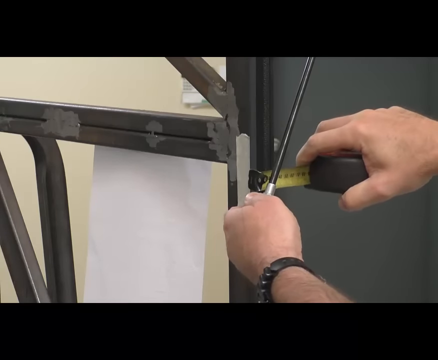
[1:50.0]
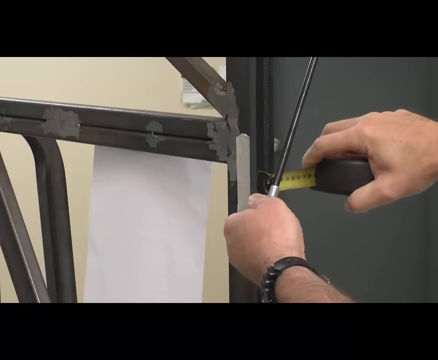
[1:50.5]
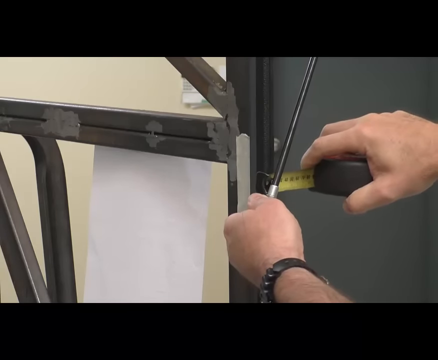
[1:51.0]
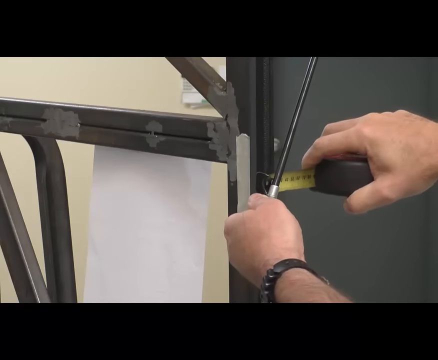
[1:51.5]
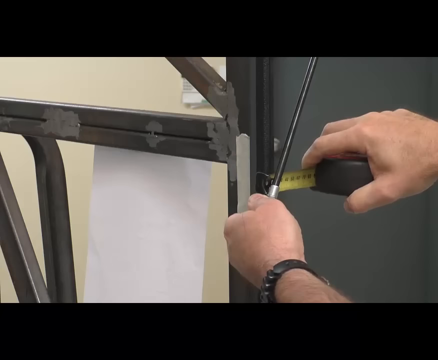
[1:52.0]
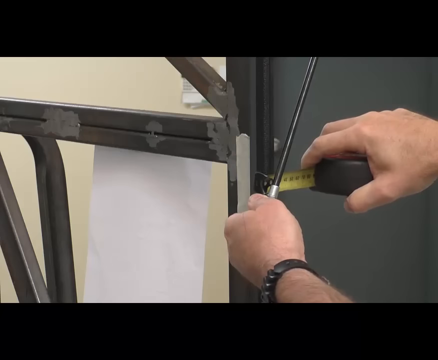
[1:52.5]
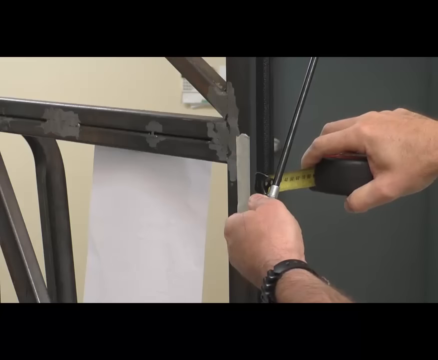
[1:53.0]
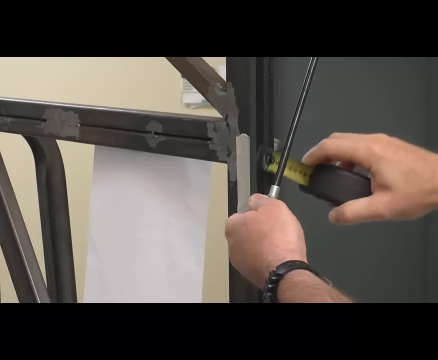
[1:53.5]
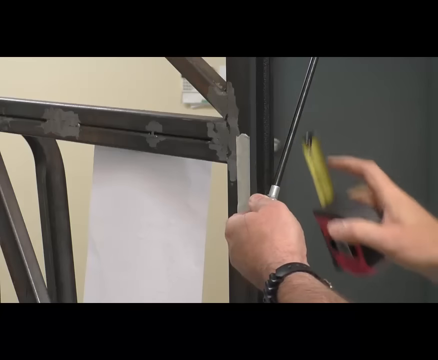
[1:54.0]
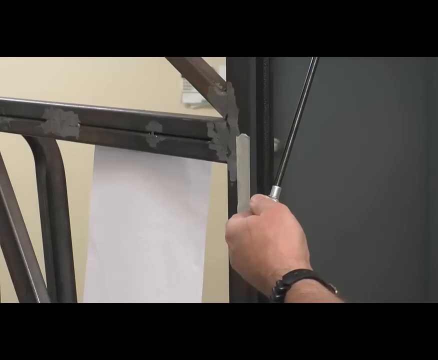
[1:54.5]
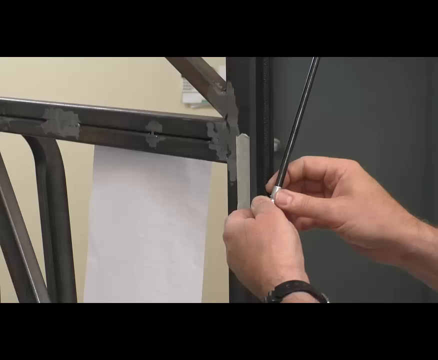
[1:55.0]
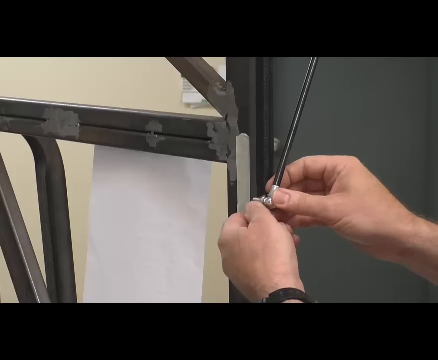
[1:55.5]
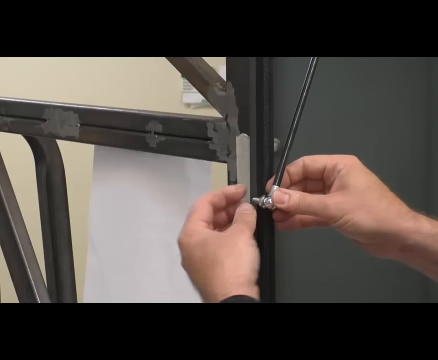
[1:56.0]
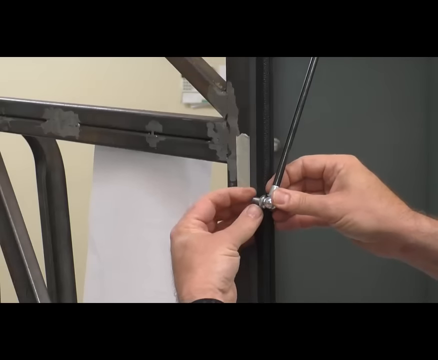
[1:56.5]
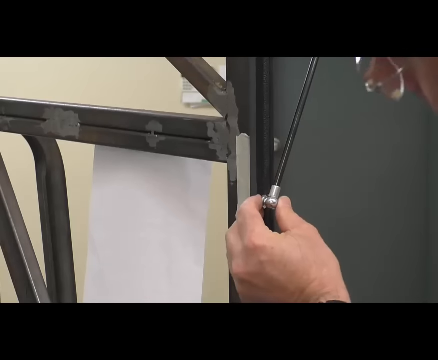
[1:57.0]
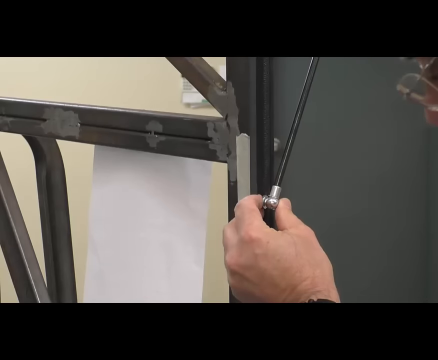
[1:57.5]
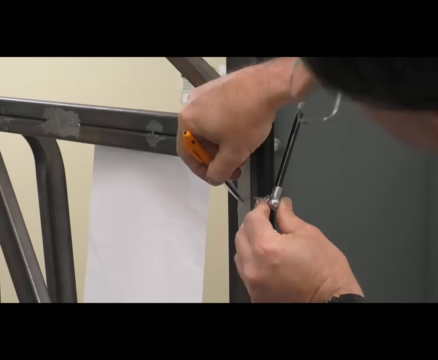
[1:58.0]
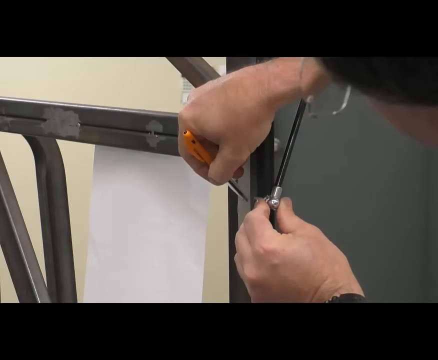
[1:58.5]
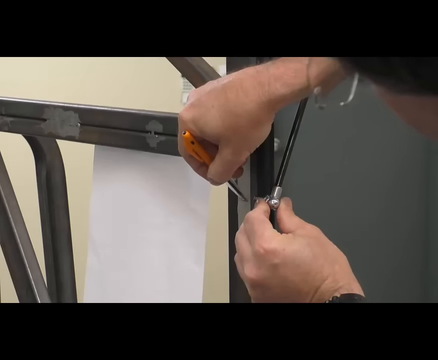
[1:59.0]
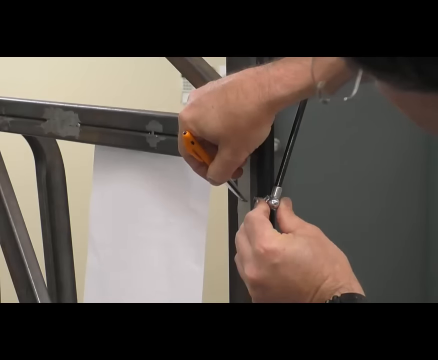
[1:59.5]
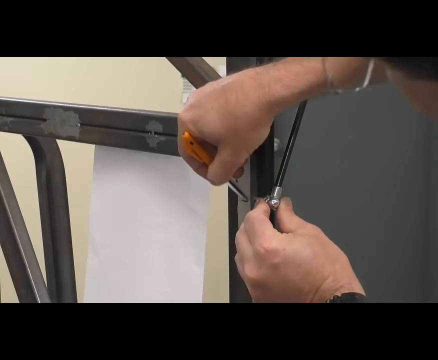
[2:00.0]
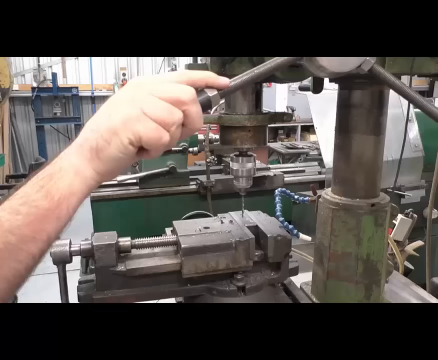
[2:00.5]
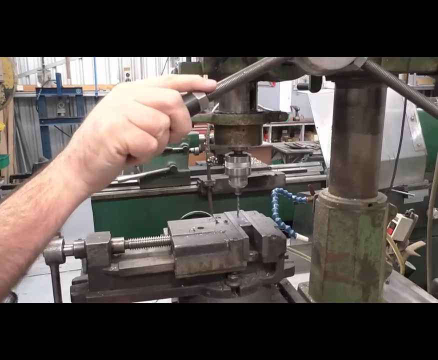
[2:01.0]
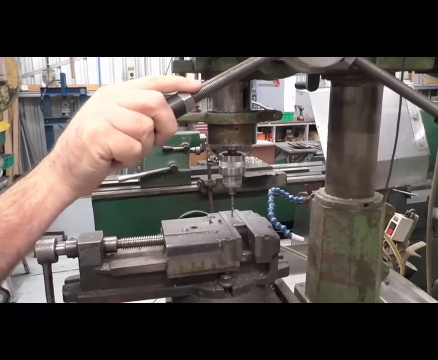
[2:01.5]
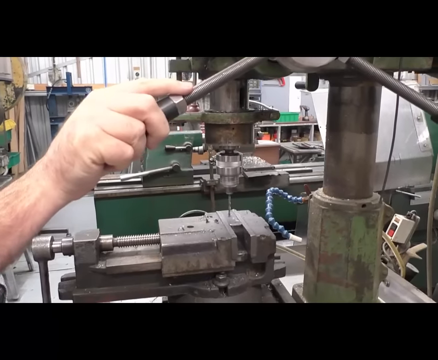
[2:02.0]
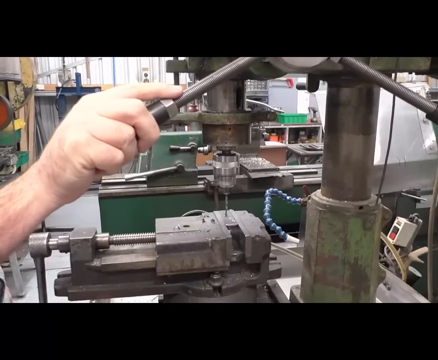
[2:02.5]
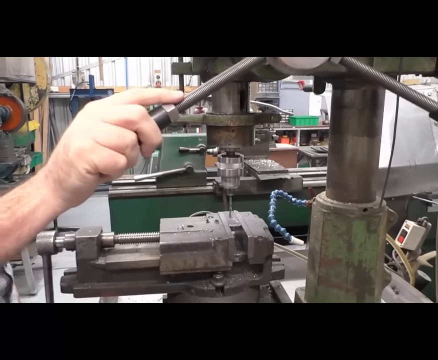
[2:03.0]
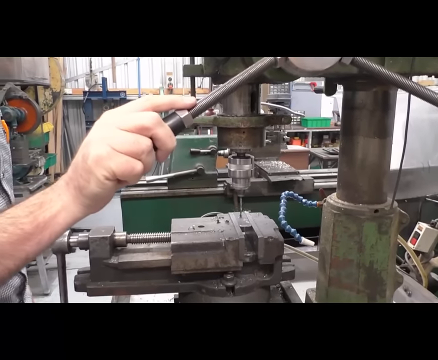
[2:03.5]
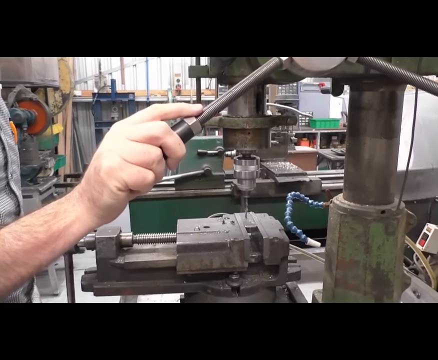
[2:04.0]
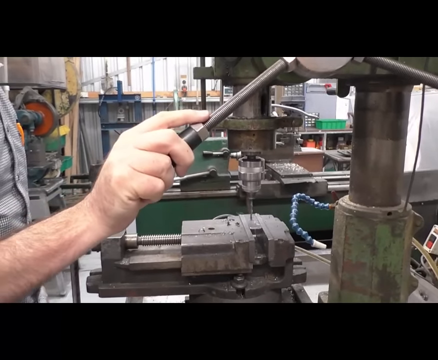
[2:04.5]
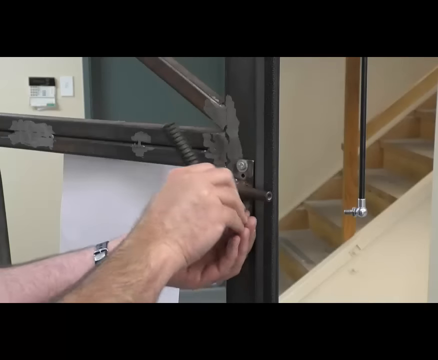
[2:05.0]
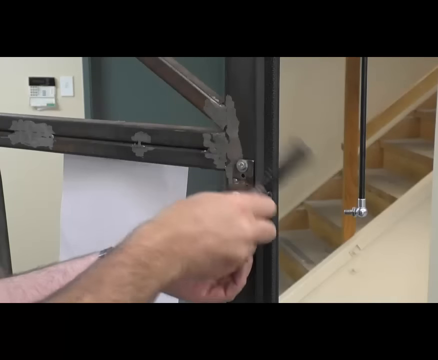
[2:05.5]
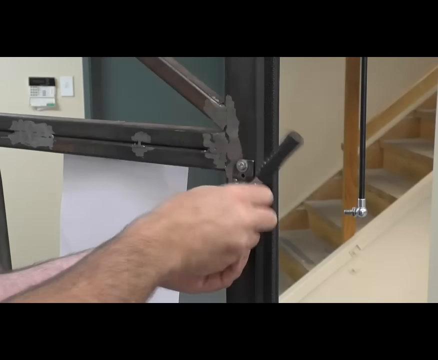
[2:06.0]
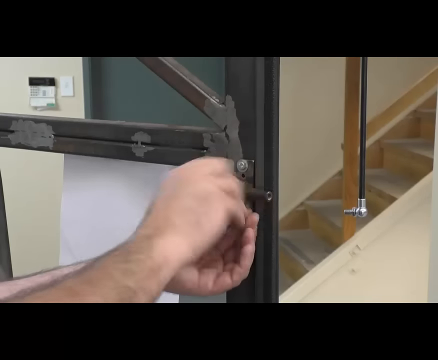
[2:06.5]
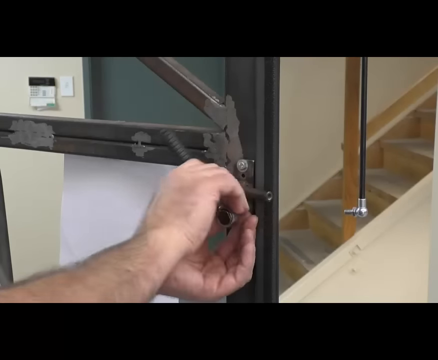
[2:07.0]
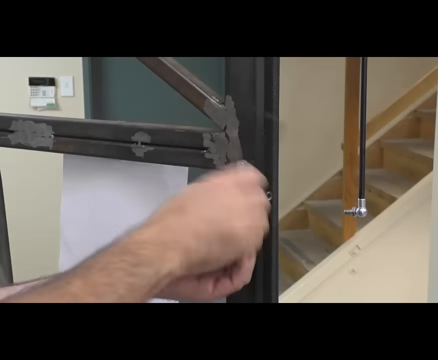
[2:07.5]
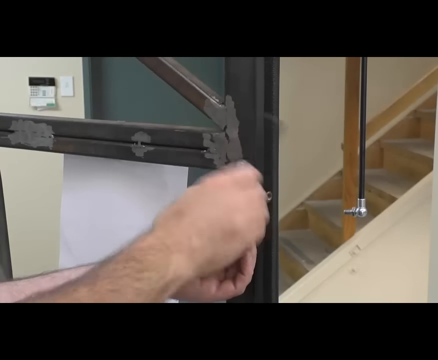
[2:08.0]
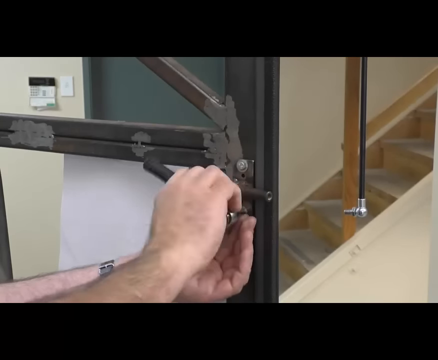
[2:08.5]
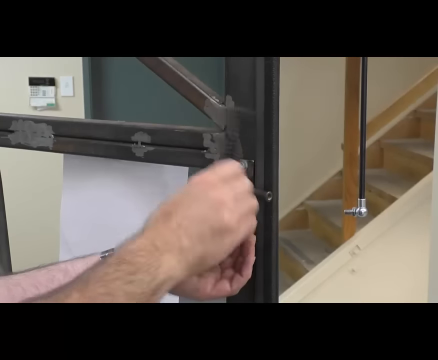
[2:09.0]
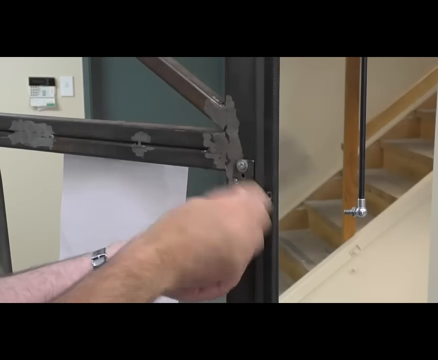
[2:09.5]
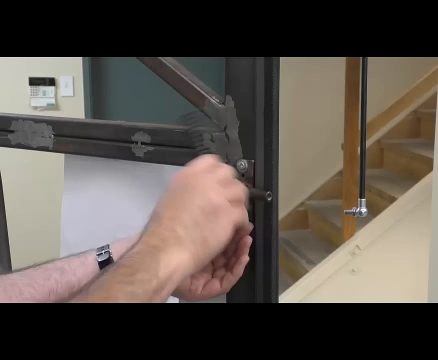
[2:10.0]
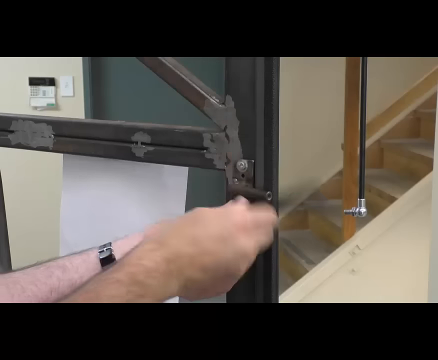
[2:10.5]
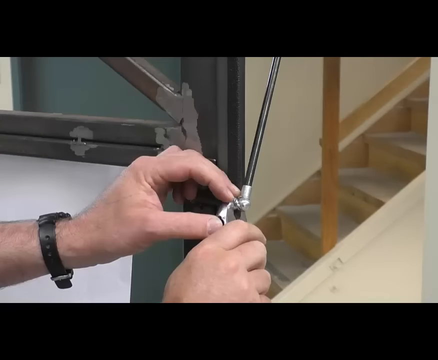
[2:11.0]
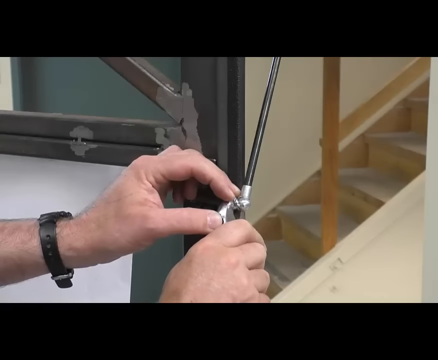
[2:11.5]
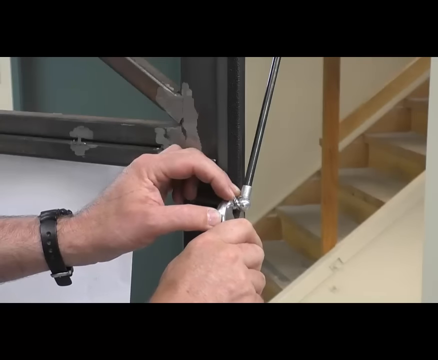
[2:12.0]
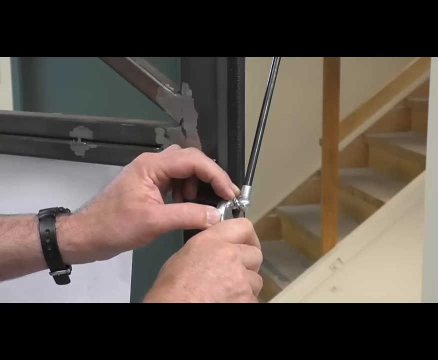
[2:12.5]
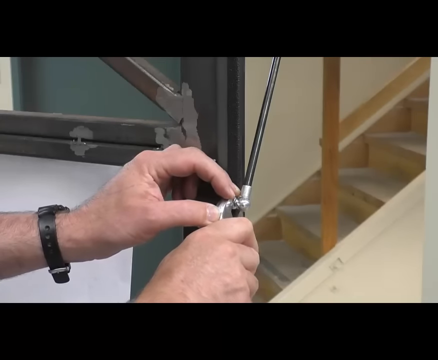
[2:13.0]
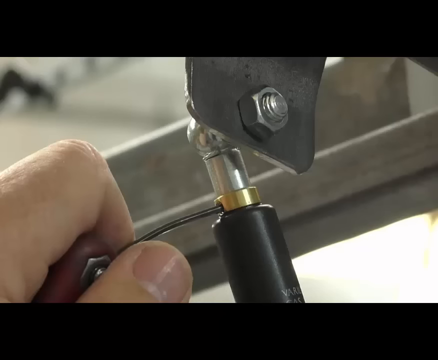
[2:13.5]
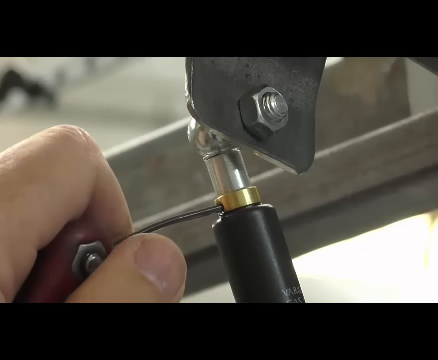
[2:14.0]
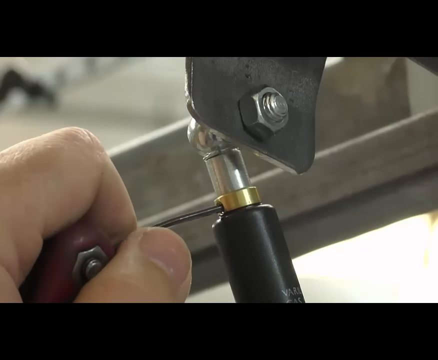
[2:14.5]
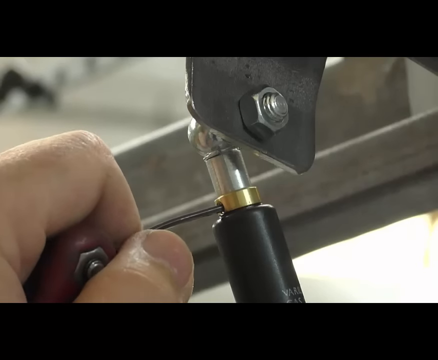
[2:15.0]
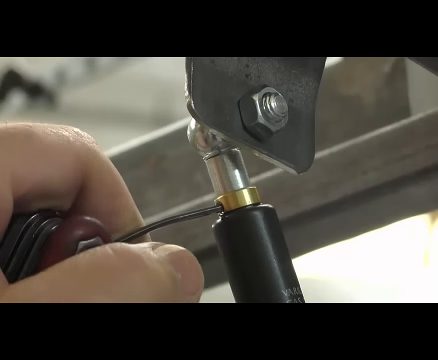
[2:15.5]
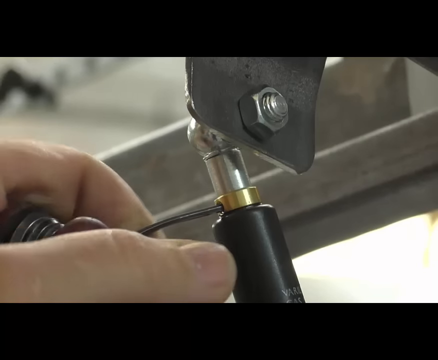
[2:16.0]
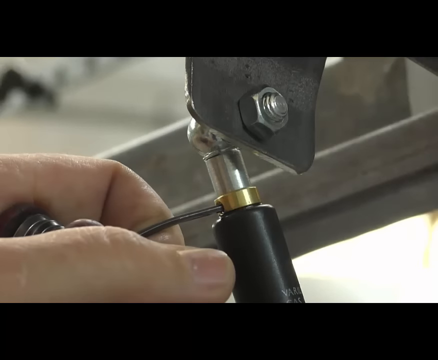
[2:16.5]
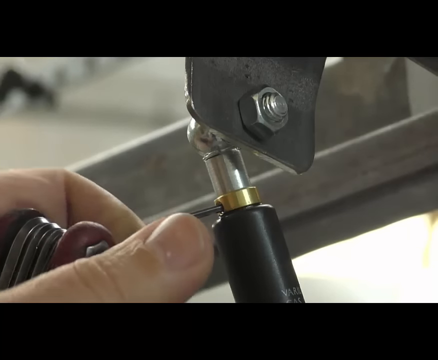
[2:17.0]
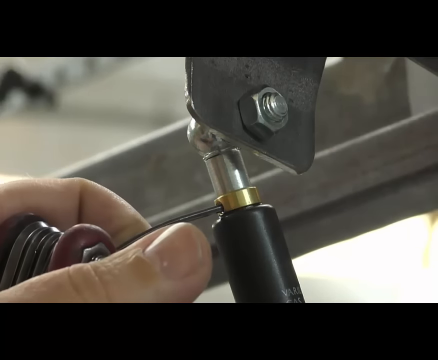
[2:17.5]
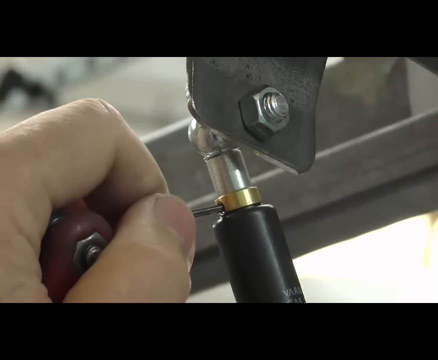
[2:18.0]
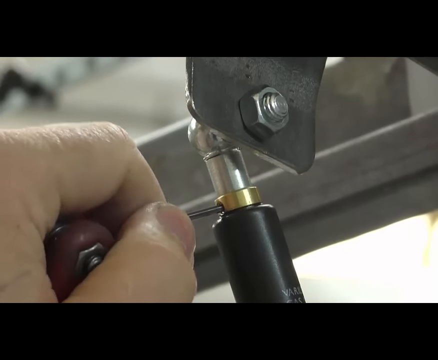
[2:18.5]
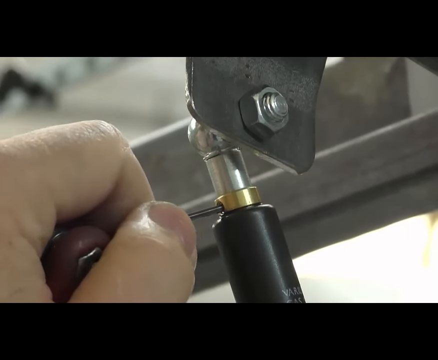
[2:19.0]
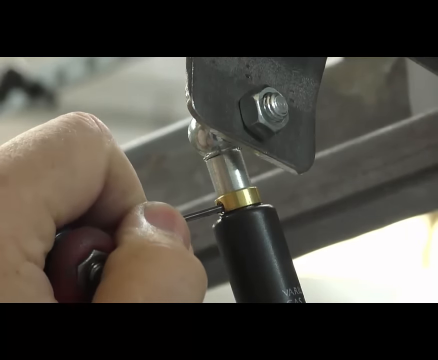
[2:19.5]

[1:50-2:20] The man keeps measuring the same small section, with only a couple of inches of the yellow metal measuring tape showing. A wider-angle shot shows someone, apparently him, drilling something at the machine seen earlier. He then puts some kind of metal tube through some type of piece of equipment, possibly where he drilled the hole, and marks something. The shop seems fairly clean, neat and organized; stairs are visible in the background along with what looks like a glass door with a silver French-door-type handle. He is still in the same warehouse working on the same metal cage.